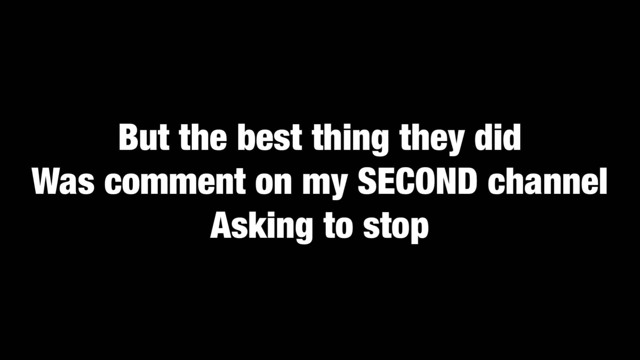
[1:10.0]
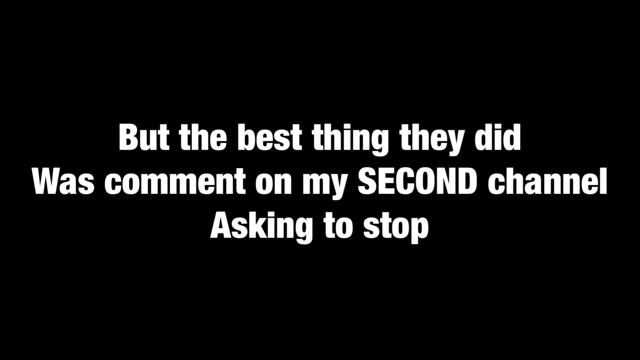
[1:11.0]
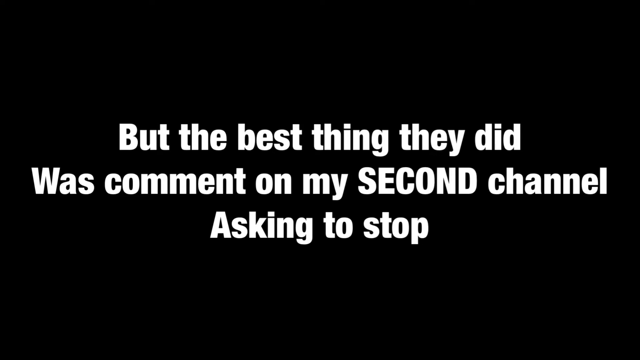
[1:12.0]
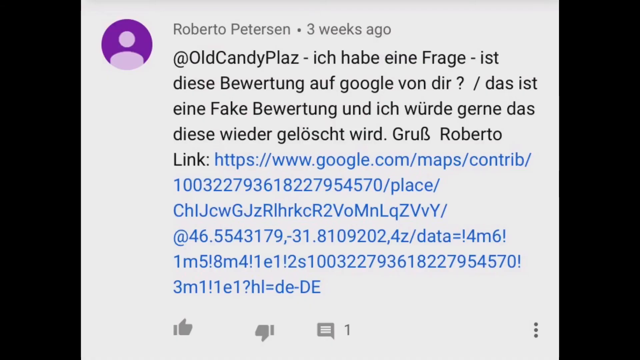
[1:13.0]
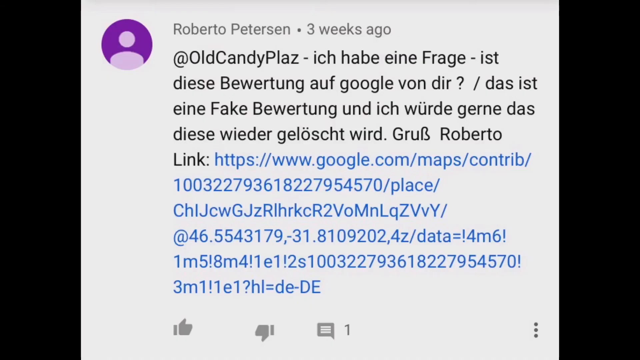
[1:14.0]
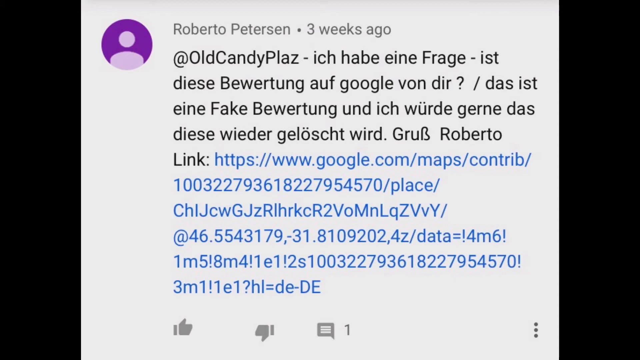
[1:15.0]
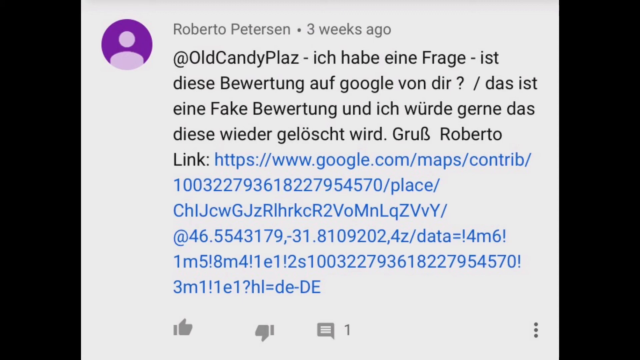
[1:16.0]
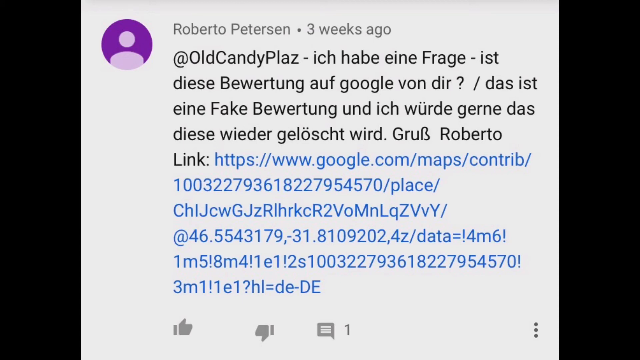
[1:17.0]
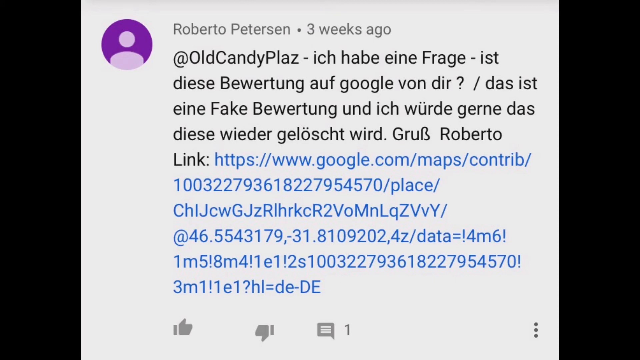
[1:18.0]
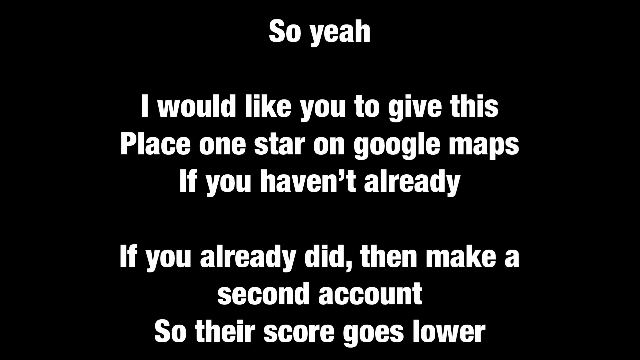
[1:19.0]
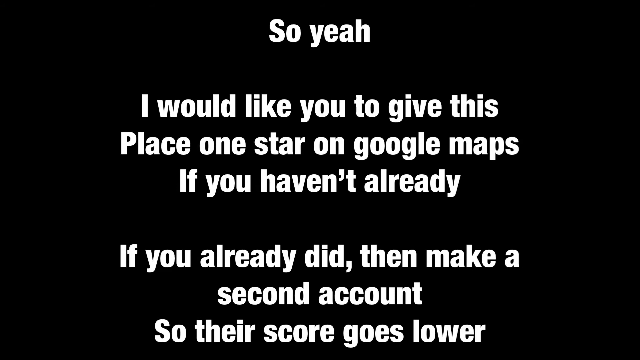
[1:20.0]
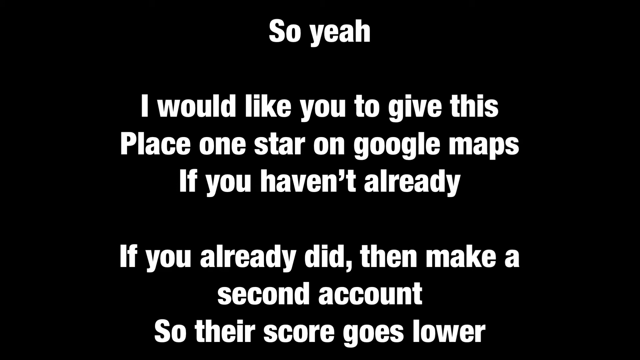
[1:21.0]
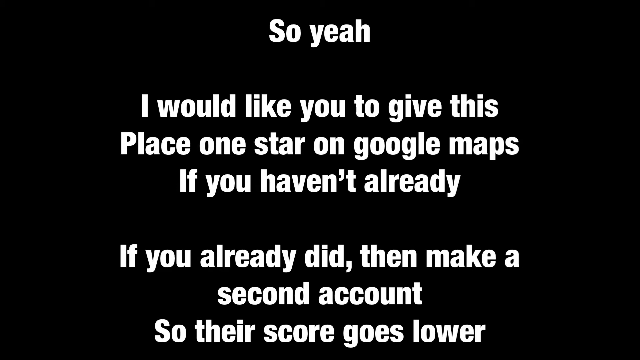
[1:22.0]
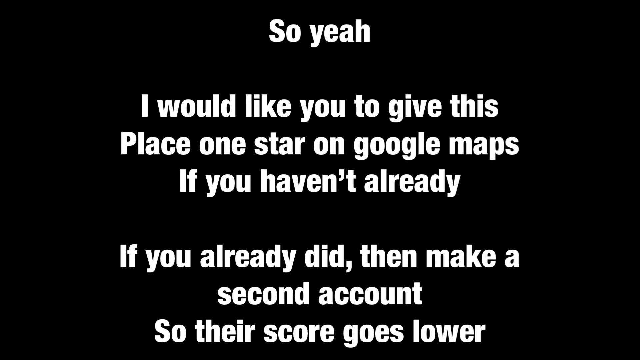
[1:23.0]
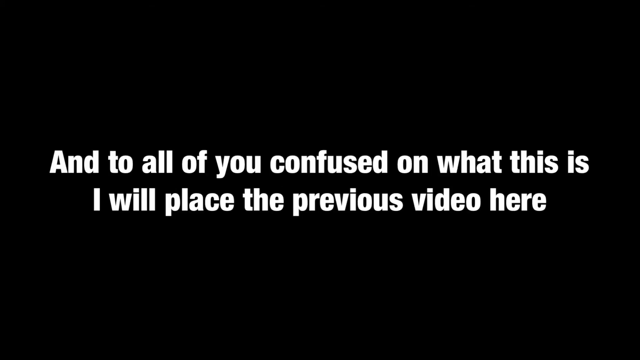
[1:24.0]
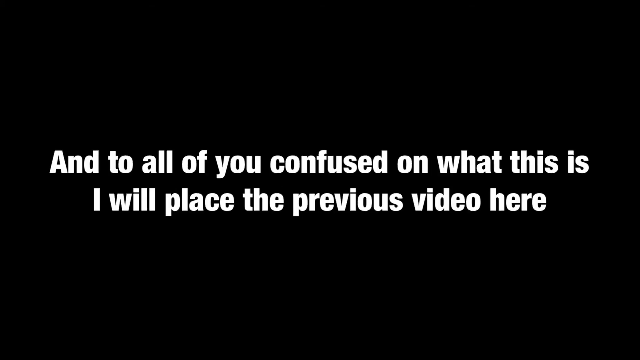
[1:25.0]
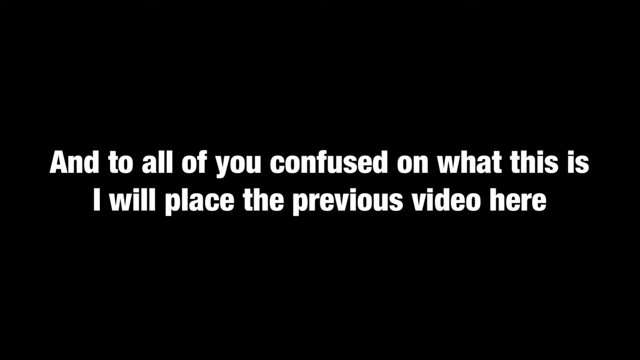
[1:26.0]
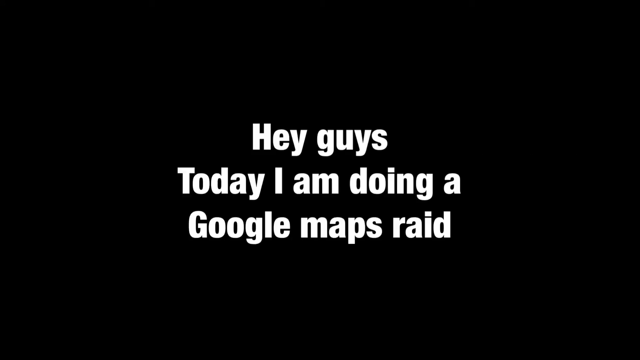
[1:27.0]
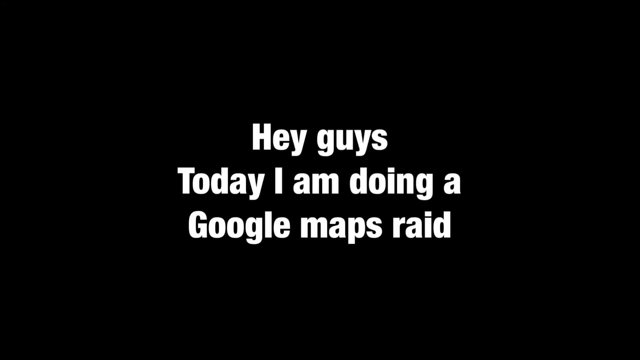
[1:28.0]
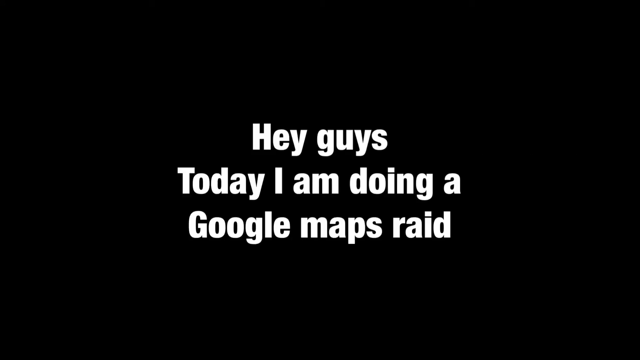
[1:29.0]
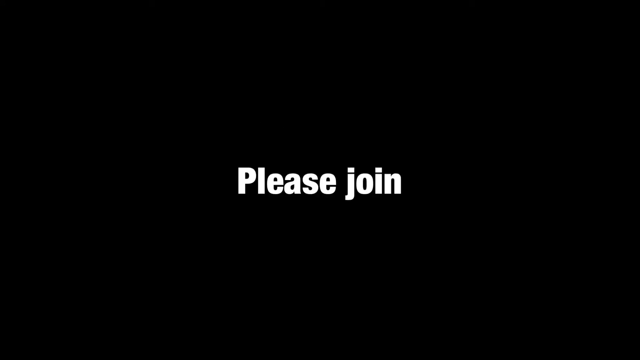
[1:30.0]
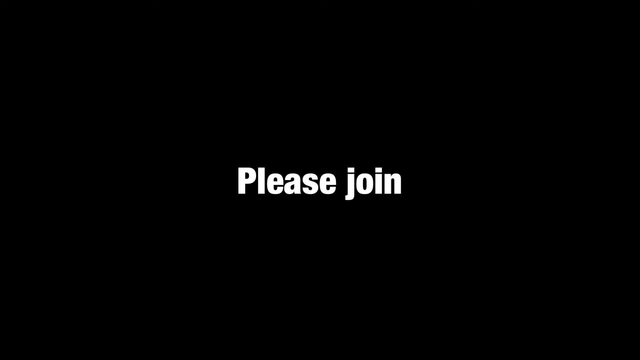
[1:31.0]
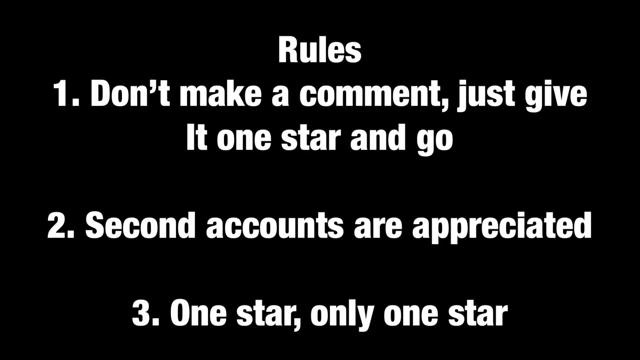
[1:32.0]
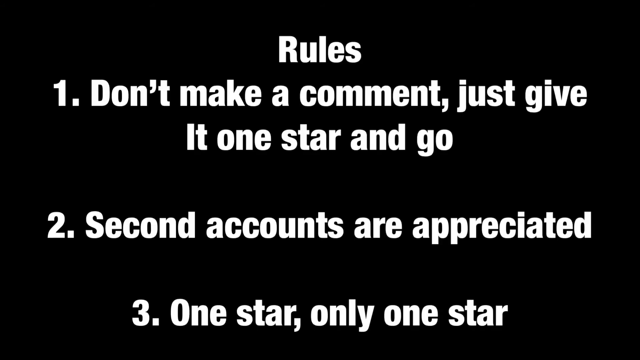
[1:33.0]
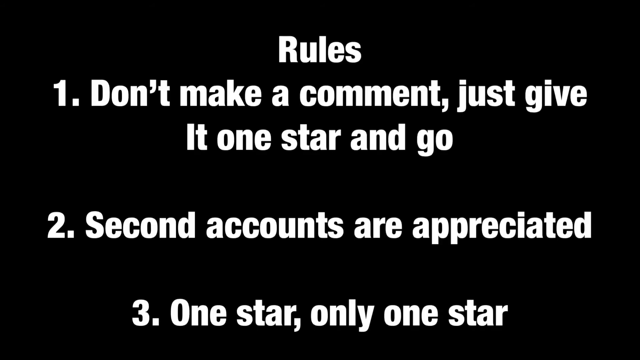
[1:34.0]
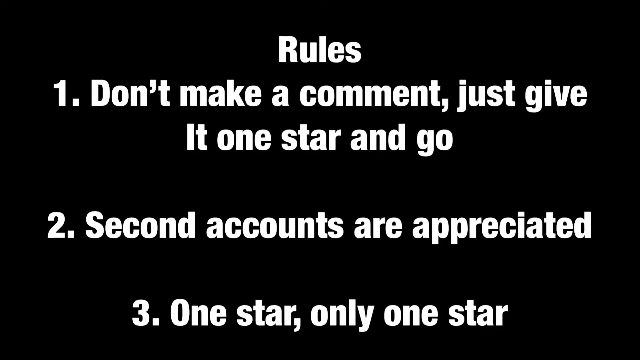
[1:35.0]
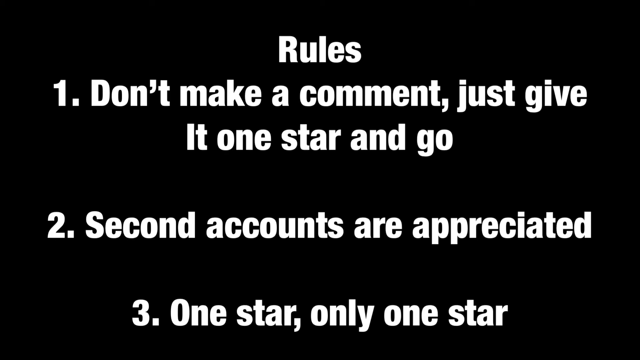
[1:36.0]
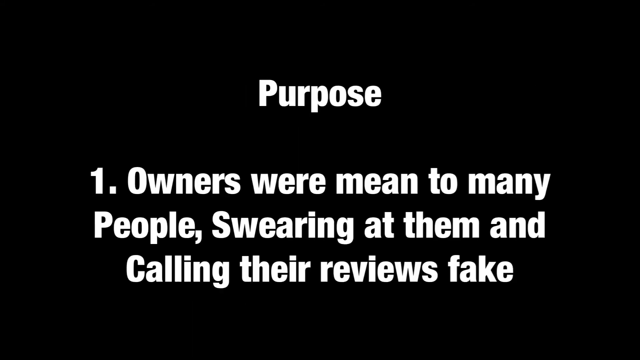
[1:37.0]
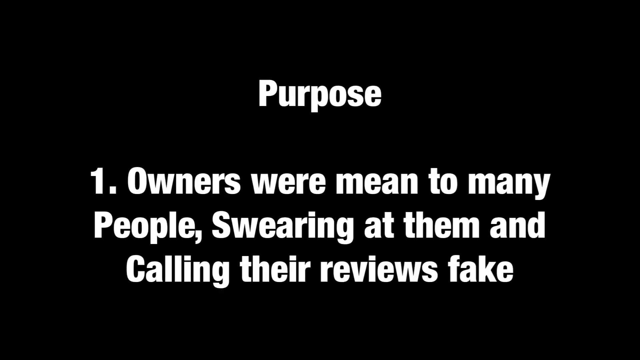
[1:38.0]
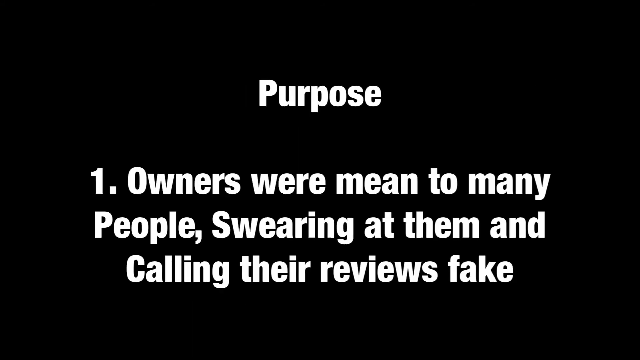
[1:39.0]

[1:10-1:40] The video shows German text with an empty circular profile icon colored lavender with a touch of purple. The username is Roberto Pizzin, posted three weeks ago, and the text mentions the username "Old Candy Plus". The following message is in German and includes words such as Google, fake and Roberto Link. At the end is a link beginning "https://www.google.com/maps/country/100322793618227954570/place/" followed by a string of lowercase and uppercase letters and numbers, all on a white background. The video transitions to text reading "so here" in white, then "I would like you to give this place one star on google maps if you haven't already if you already did then make a second account so their score goes lower" in white on a black background. Next comes text reading "and to all of you confused on what this is is I replaced the previous video here" in white on a black background, followed by "hey guys today I'm doing a google maps raid please join" in white and black. Rules follow in white text on a black background: "rules", "number one don't make a comment just give it one star and go", "number two second account are appreciated" and "three one star only one star". Then white text lists as number one that "owners were mean to many people swearing at them and calling their reviews fake".